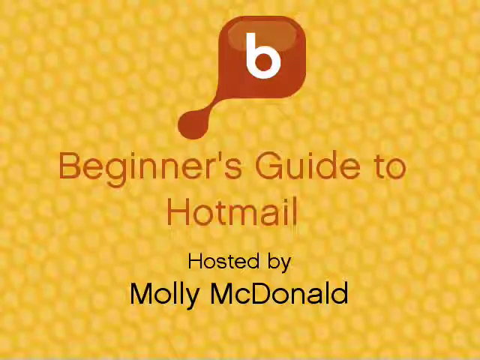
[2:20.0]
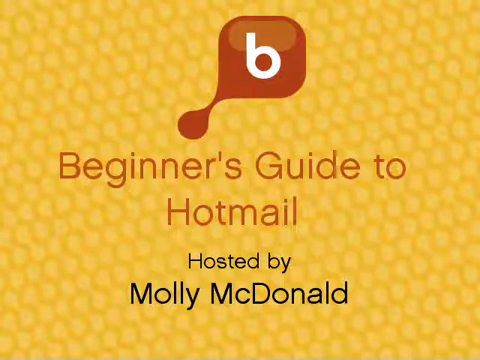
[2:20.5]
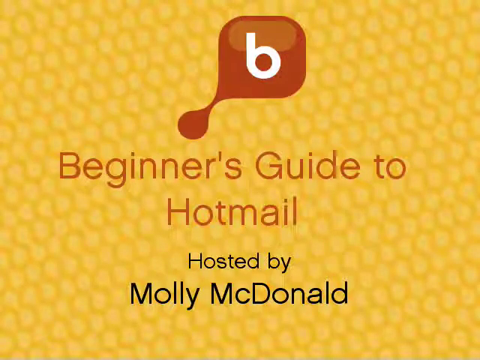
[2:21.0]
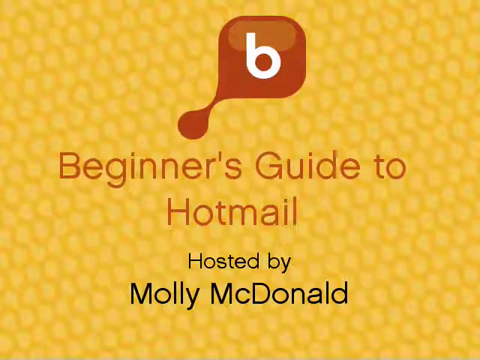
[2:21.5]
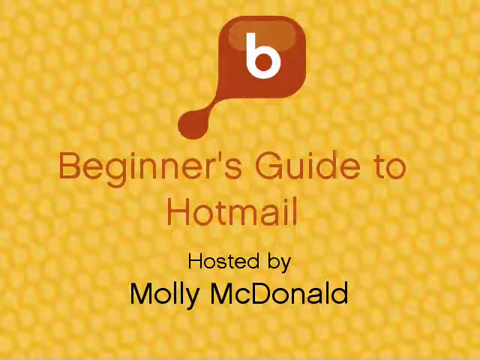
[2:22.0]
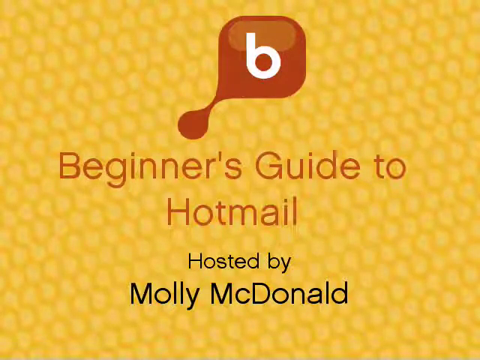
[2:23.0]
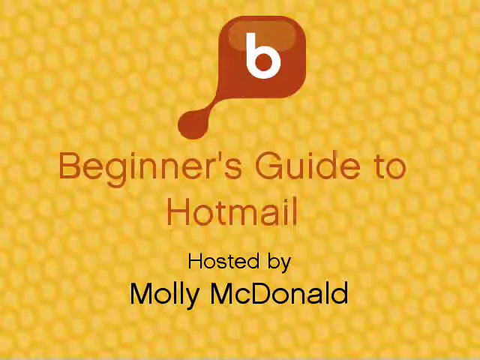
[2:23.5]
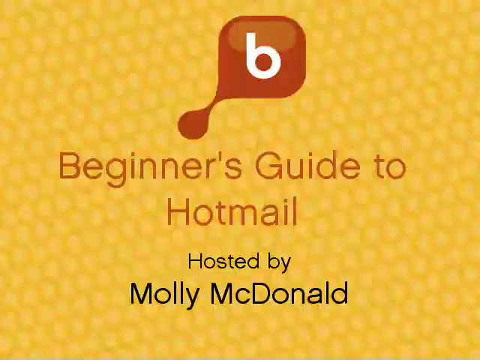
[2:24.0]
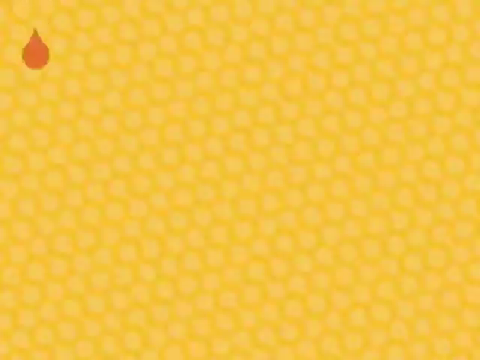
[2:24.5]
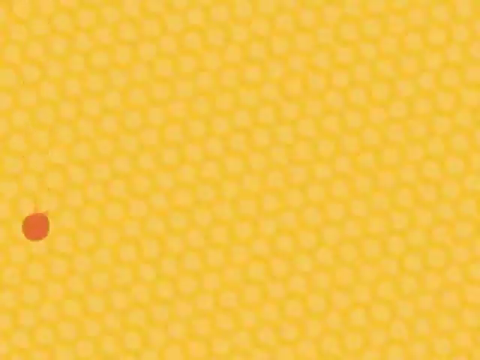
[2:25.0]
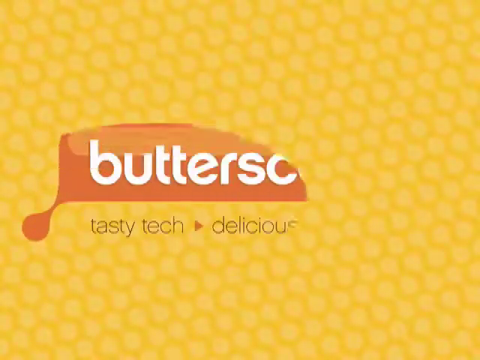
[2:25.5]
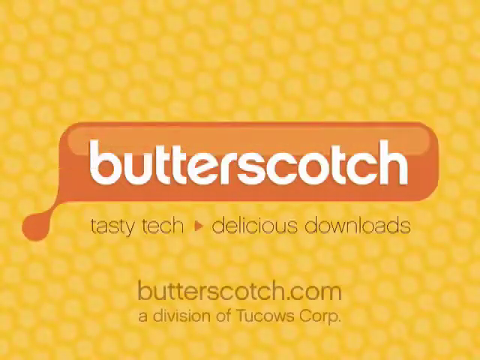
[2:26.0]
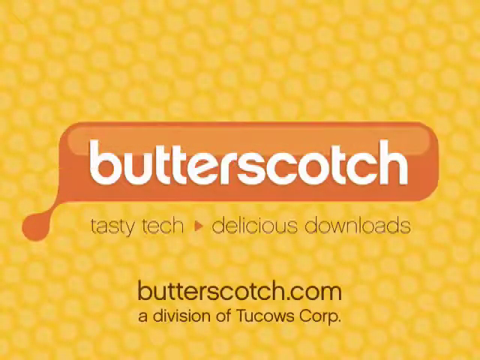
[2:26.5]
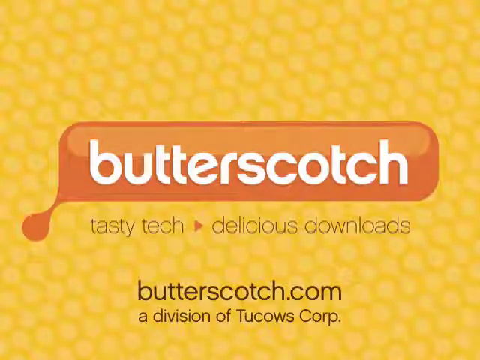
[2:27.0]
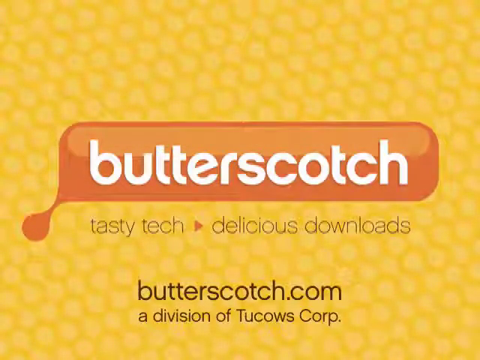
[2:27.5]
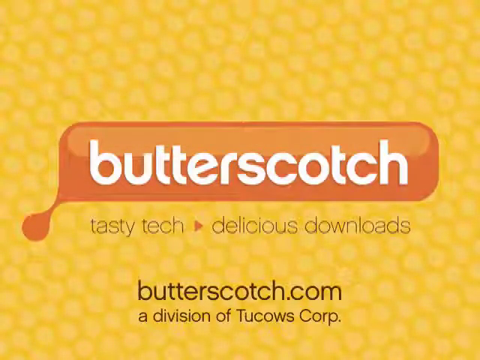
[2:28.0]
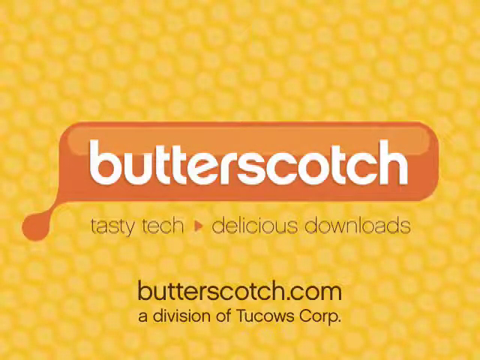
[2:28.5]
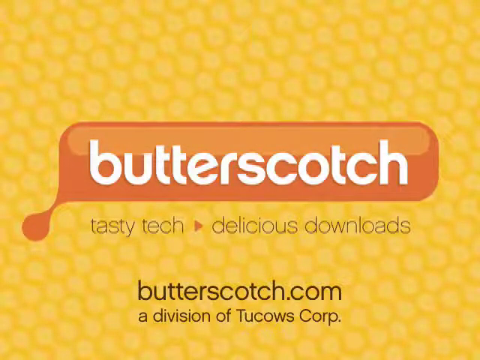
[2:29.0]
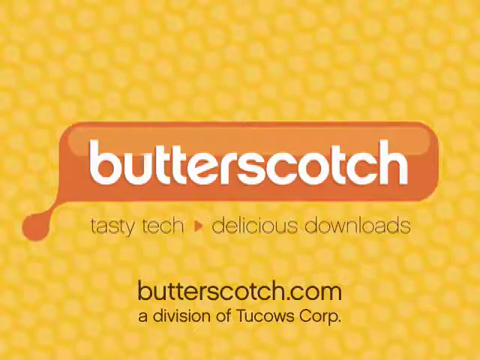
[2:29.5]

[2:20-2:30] An intro-outro style presentation screen appears, with a yellow background and a faint lighter yellow pattern. In the top center is a logo that looks like an orange 3D-style speech bubble with a single letter B in white text in its center. Below it, a first paragraph in orange text reads "Beginner's Guide to Hotmail", and below that a two-line paragraph in black text reads "Posted by Molly Macdonald". The screen then transitions to the same yellow background, where a logo appears from above: an orange speech bubble with white text inside reading "butterscotch". Below it, text reads "tasty tech" with a small orange arrow pointing right, followed by "delicious downloads". Below that is the web address "butterscotch.com", and below that "a division of Tucows Corp".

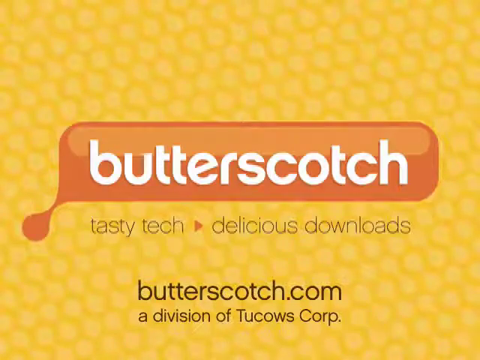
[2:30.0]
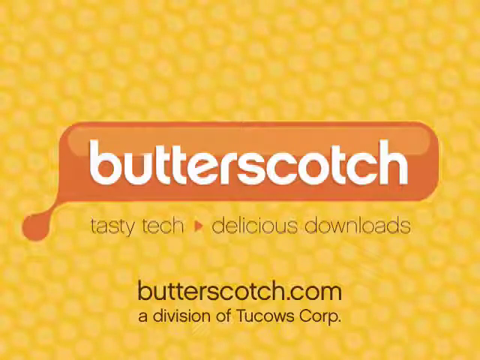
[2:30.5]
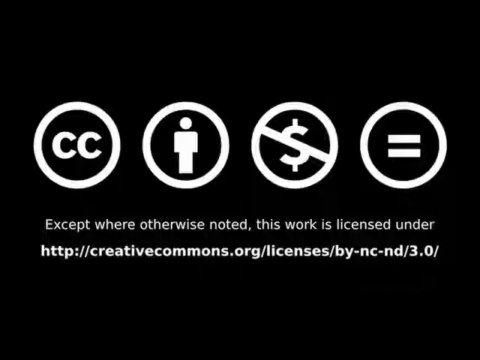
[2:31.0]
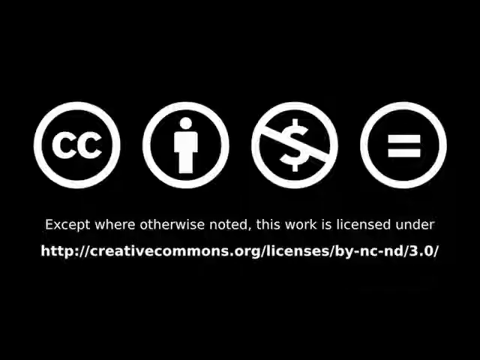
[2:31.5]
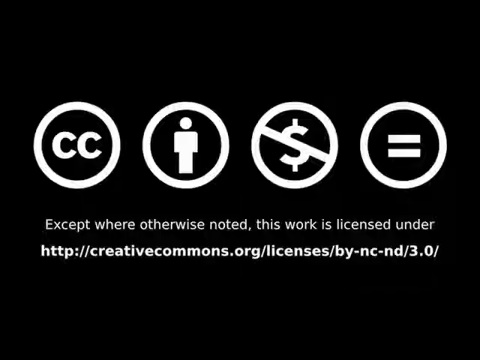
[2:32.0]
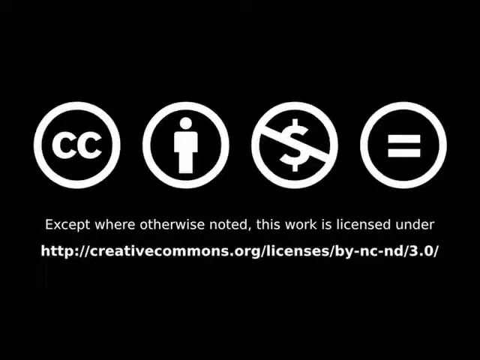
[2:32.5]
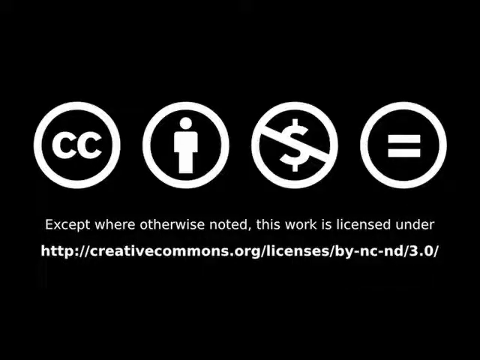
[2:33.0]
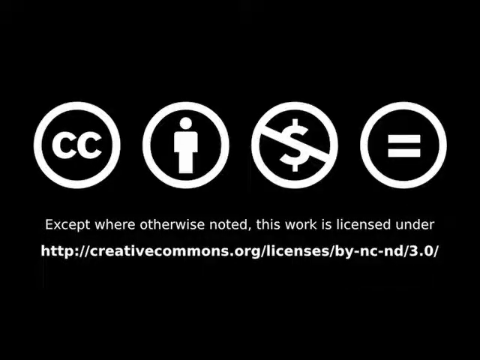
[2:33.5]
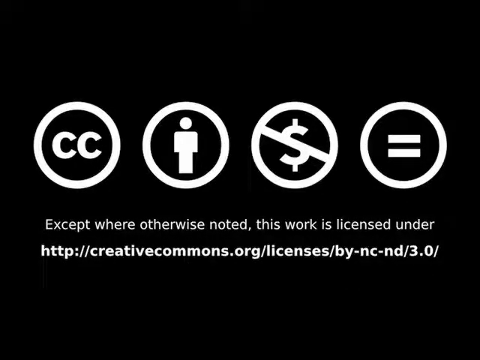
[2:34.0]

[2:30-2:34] An intro-outro style presentation screen shows a solid yellow background with a faint lighter yellow pattern overlaying it. In the centre is a large orange 3D speech bubble with the word "butterscotch" in white text in its centre. Below it, smaller text reads "tasty tech, delicious downloads", and below that, more text reads "butterscotch.com, a division of Tucows Corp". The screen then changes to a solid black background with four white, circular infographics: the first has "CC" inside it, the second an outline of a person, the third a dollar sign with a diagonal line through it, and the last an equals sign. Below them, text reads "except where otherwise noted, this work is licensed under http://creativecommons.org".